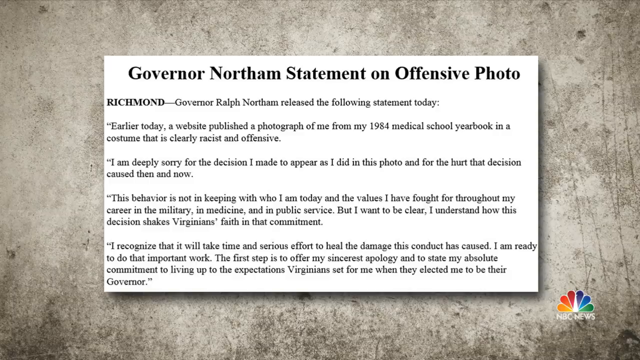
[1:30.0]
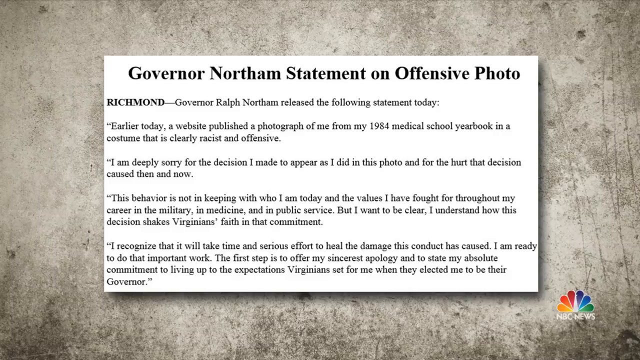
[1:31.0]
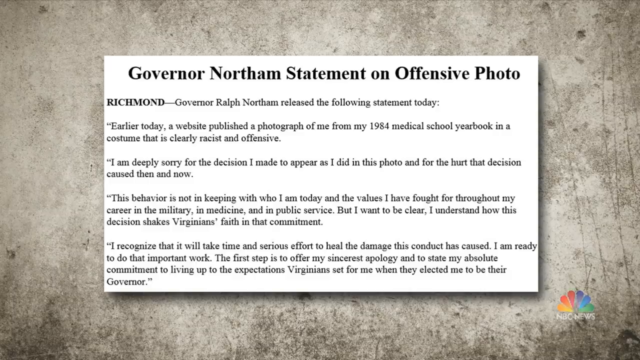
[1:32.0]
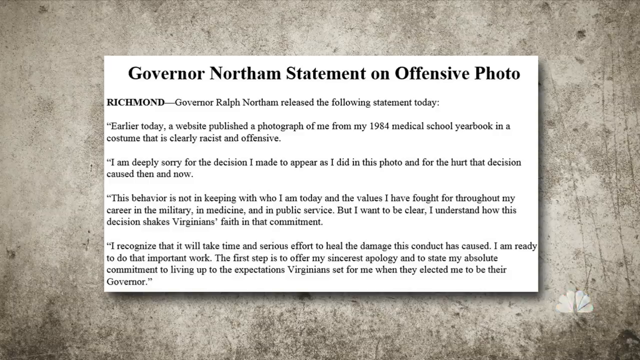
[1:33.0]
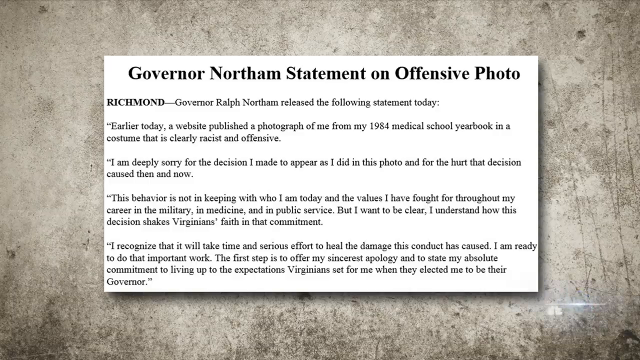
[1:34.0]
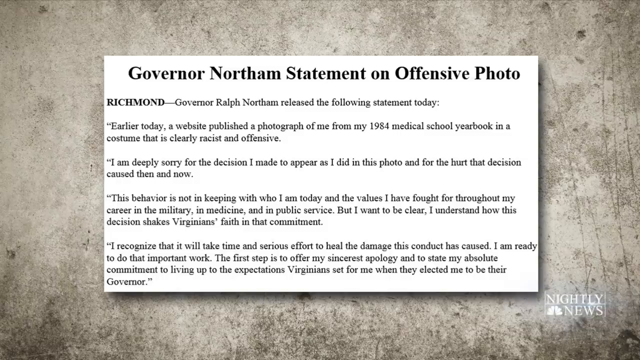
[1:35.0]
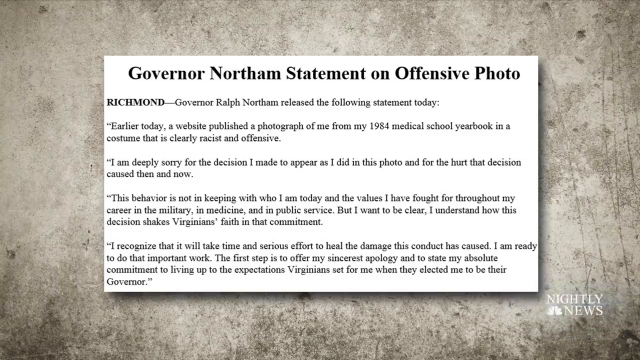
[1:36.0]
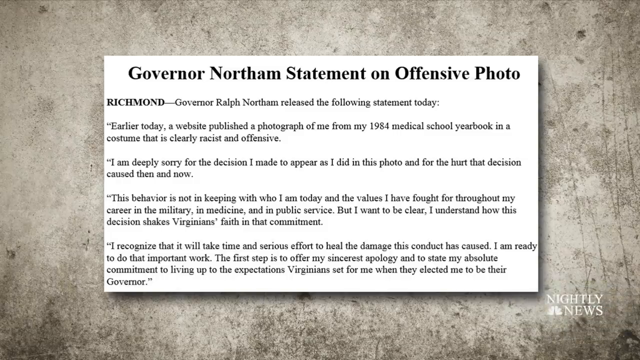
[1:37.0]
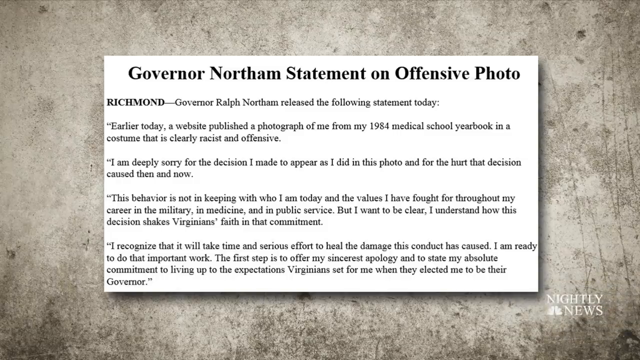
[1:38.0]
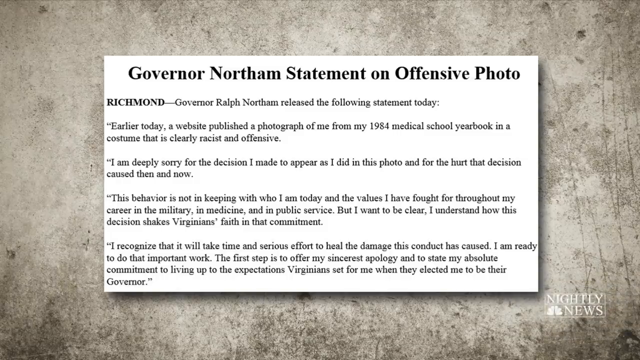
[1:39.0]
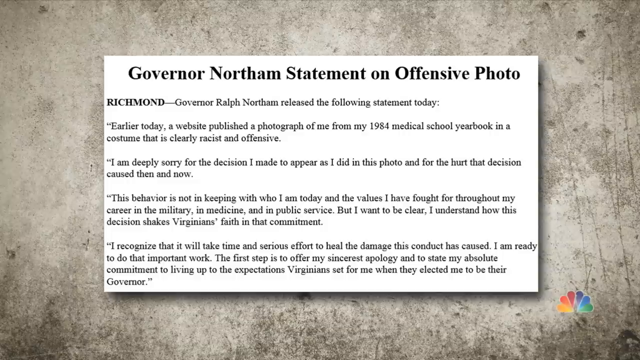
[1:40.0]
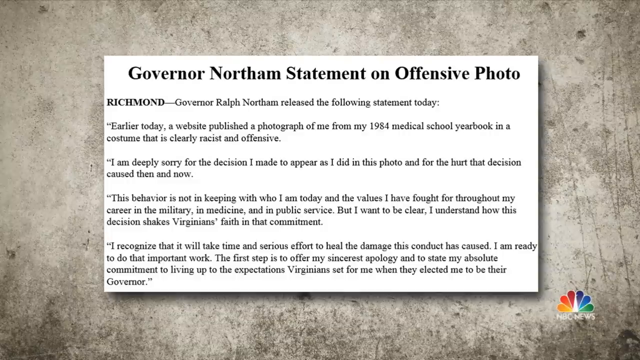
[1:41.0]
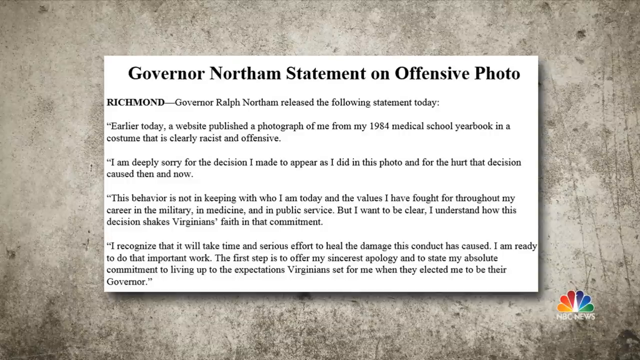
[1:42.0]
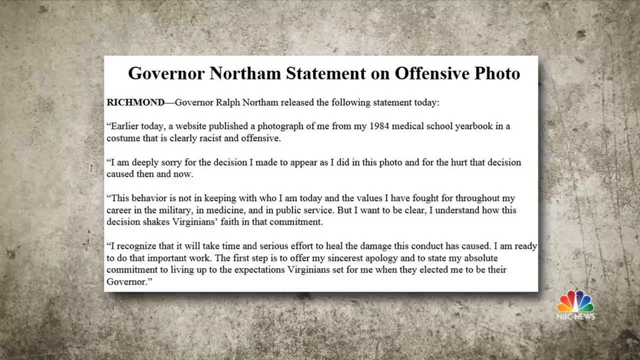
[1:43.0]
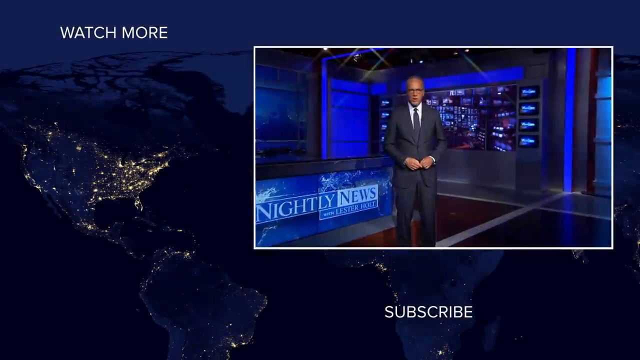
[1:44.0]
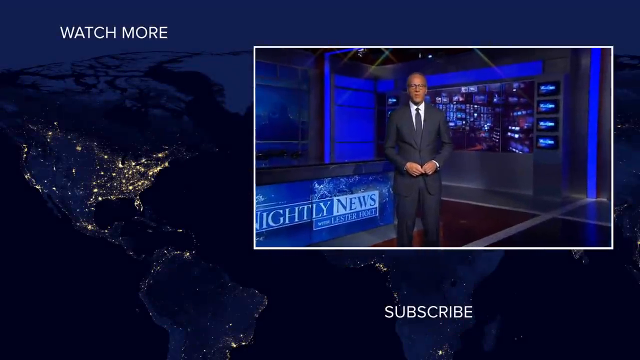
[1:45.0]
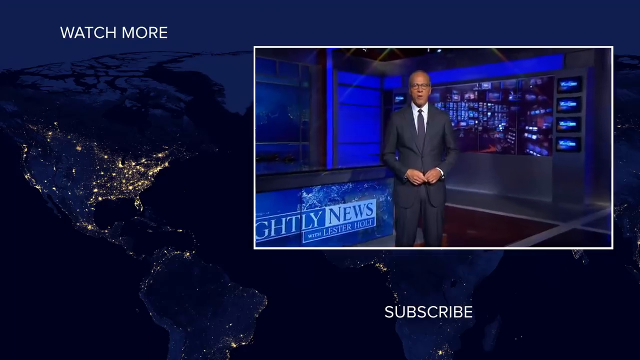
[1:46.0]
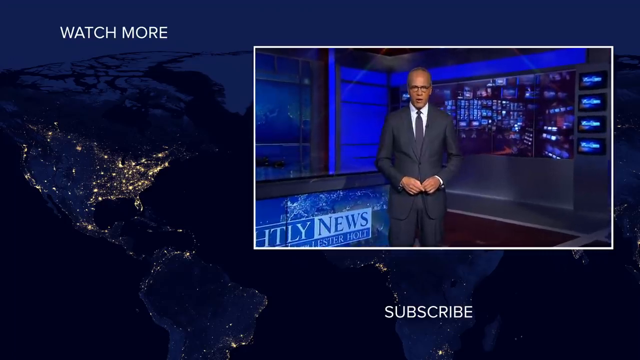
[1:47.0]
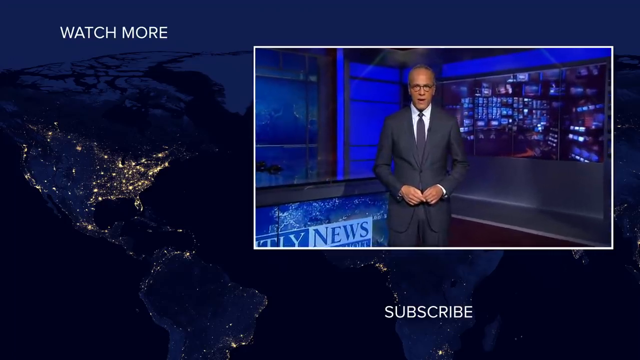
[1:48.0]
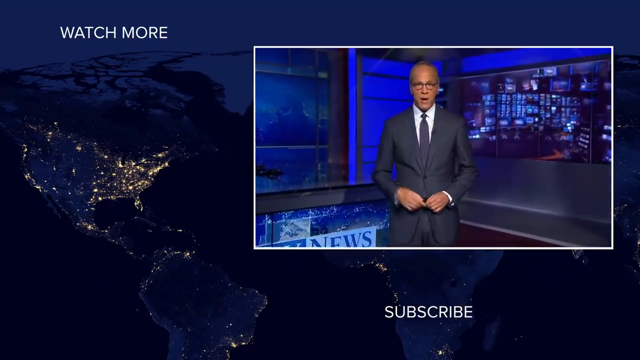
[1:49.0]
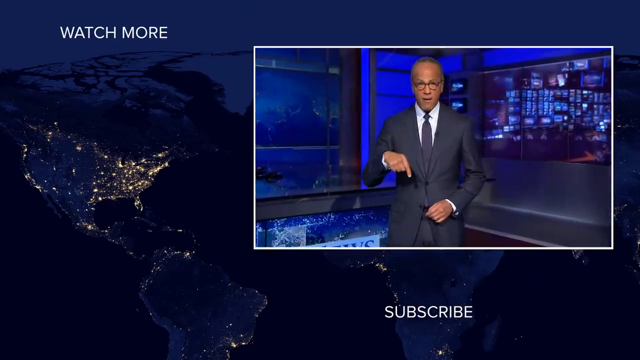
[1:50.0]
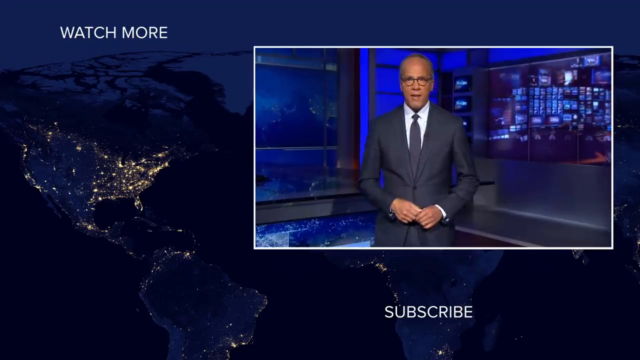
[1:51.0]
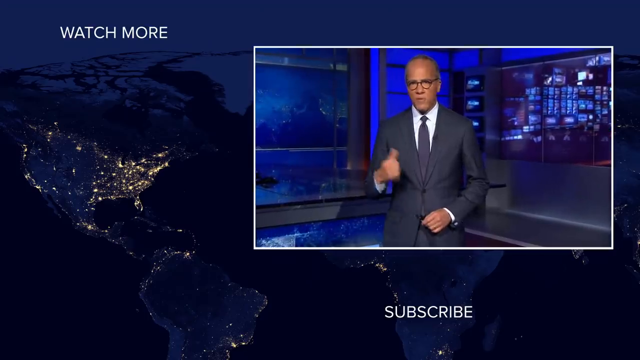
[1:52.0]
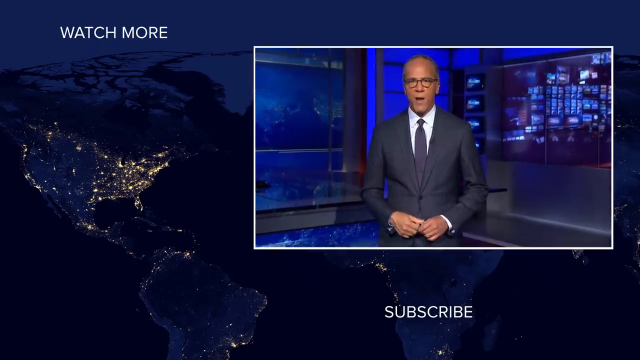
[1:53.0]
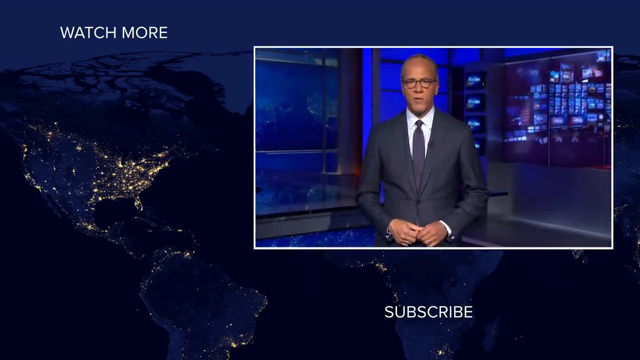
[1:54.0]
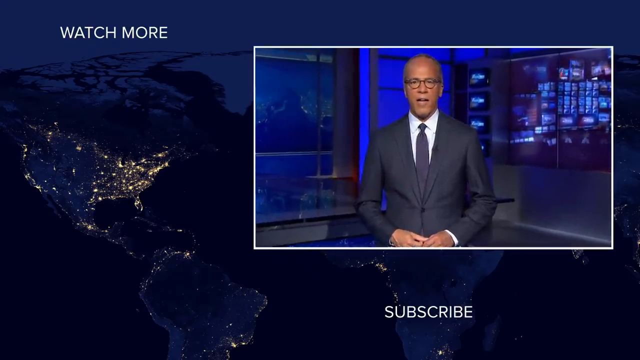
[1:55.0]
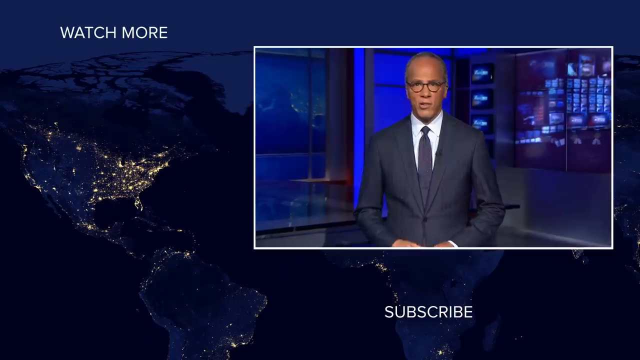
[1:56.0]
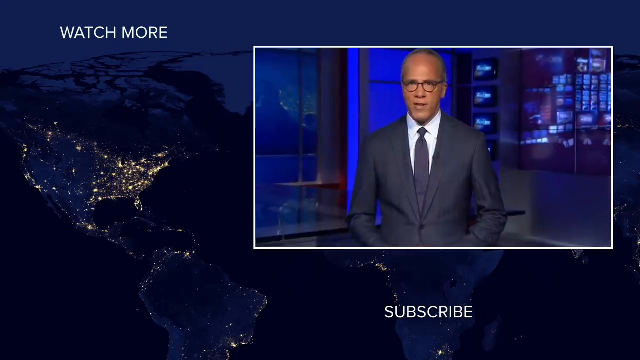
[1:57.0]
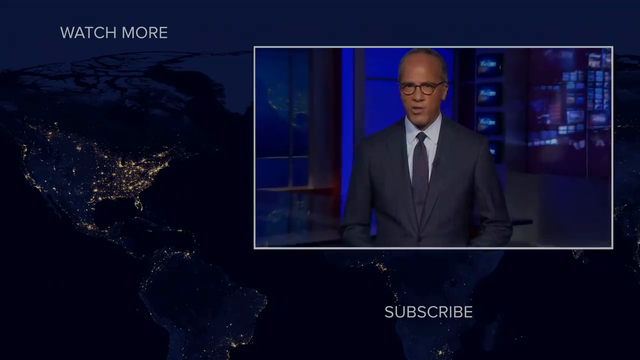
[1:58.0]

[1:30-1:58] The statement document from the governor's office remains on screen for two or three seconds, with a third paragraph reading "This behavior is not in keeping with who I am today and the values I have fought for throughout my career in the military, in medicine, and in public service, but I want to be clear I understand how this decision shakes Virginia's faith in that commitment." The slide then goes away and the video cuts to ending credits showing a map of the globe with North America and South America, and a small video insert of Lester Holt in his studio advertising his show, Nightly News with Lester Holt on NBC; he points down to the ground and then to his left. The page also has a subscribe button and a watch more button, and the video fades to black.